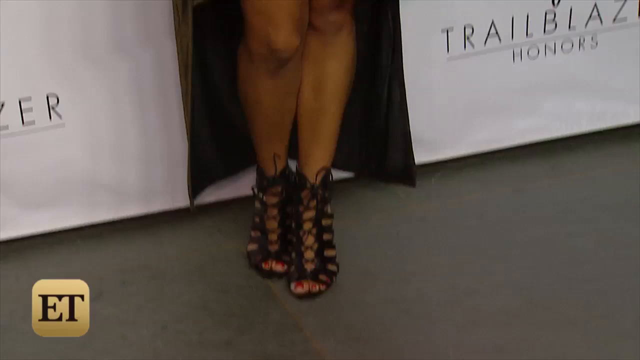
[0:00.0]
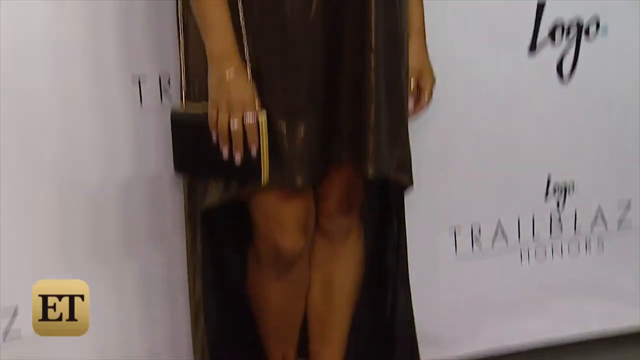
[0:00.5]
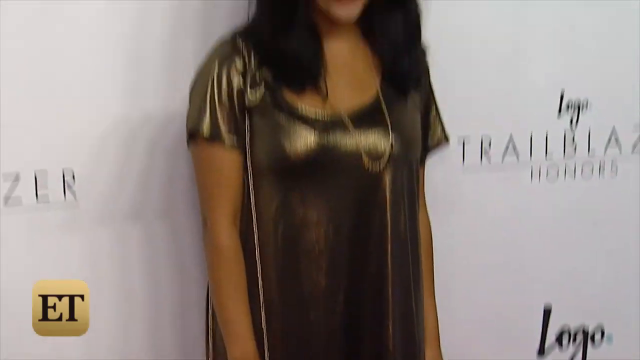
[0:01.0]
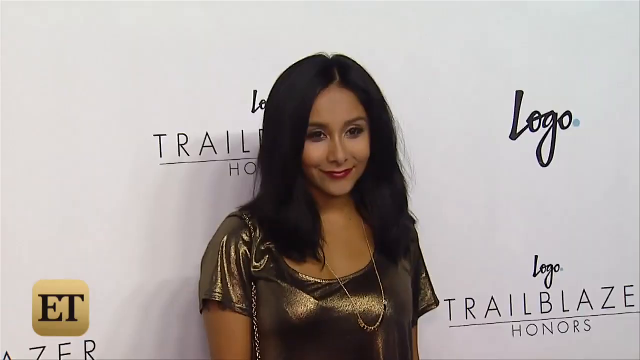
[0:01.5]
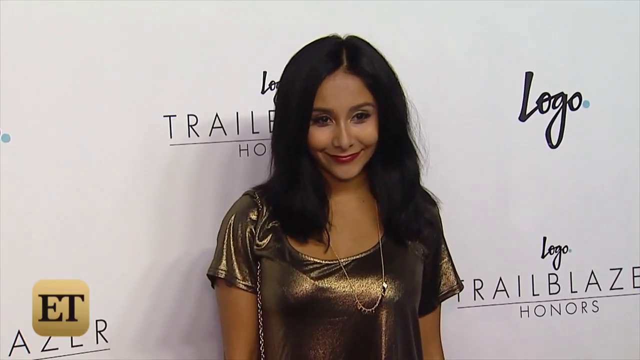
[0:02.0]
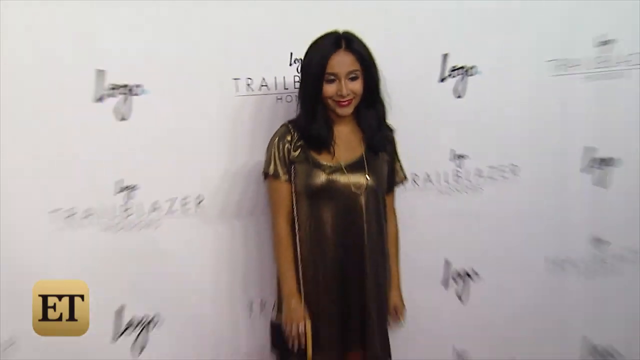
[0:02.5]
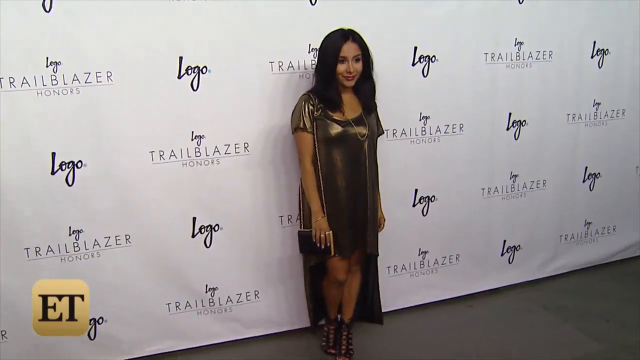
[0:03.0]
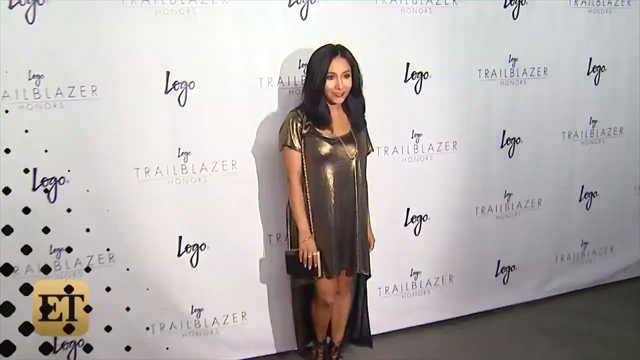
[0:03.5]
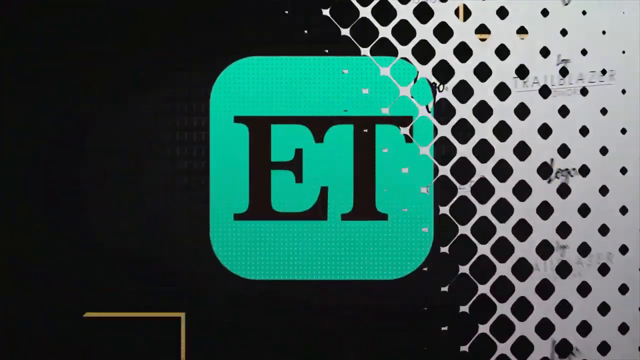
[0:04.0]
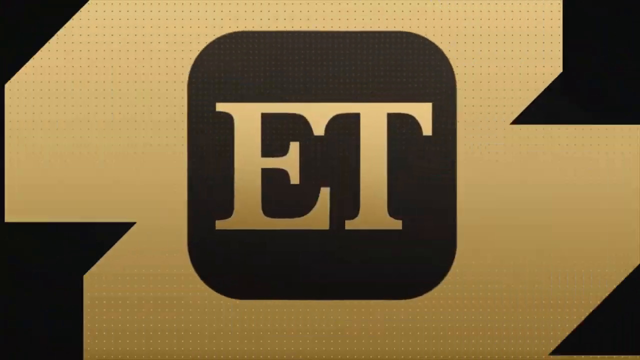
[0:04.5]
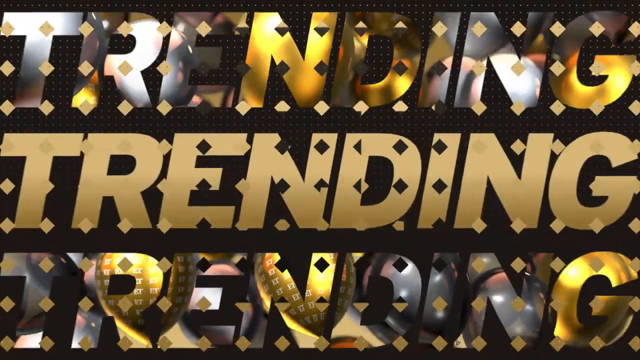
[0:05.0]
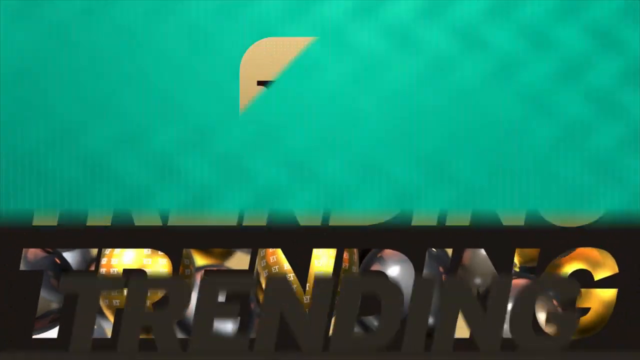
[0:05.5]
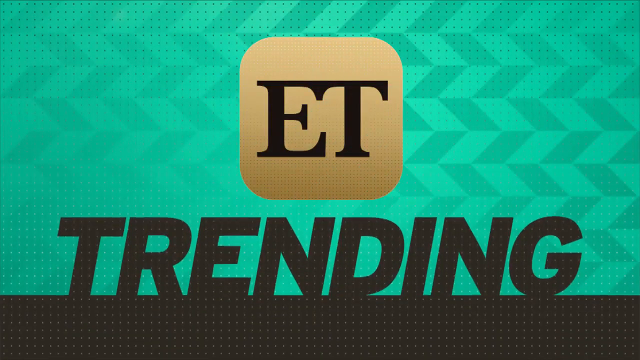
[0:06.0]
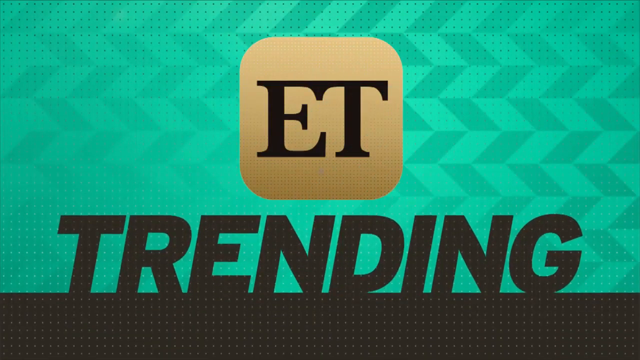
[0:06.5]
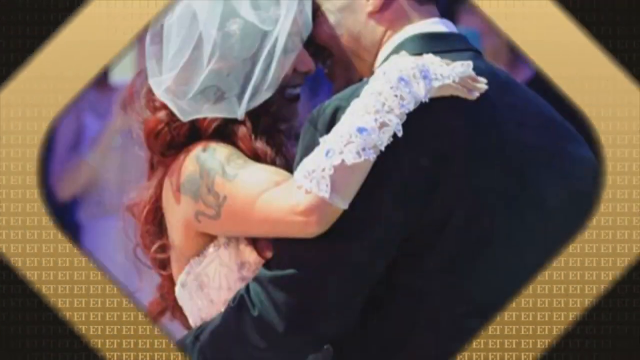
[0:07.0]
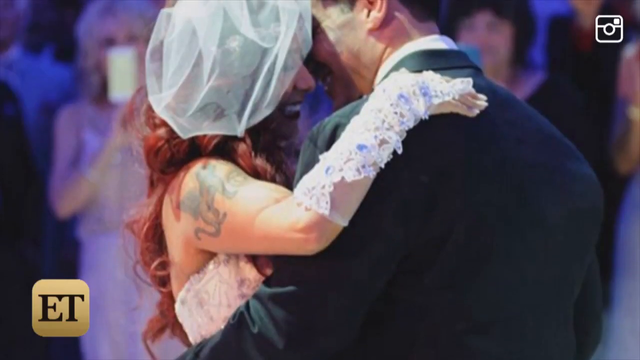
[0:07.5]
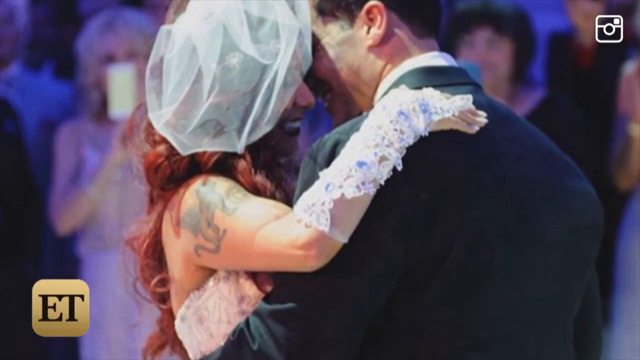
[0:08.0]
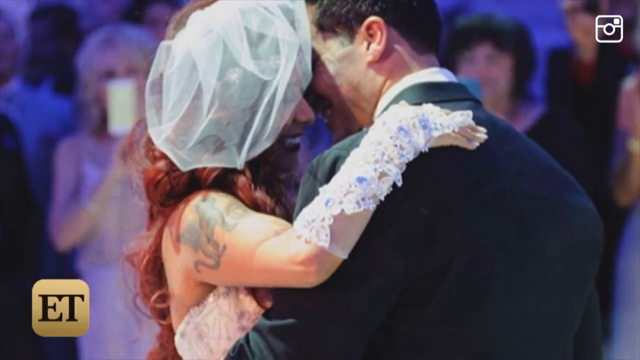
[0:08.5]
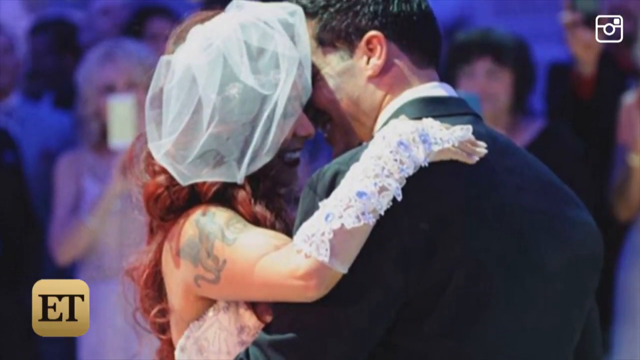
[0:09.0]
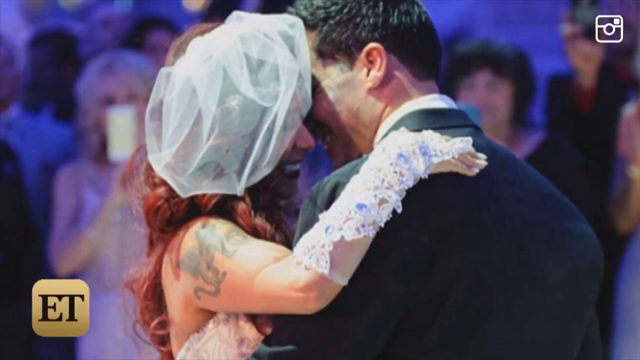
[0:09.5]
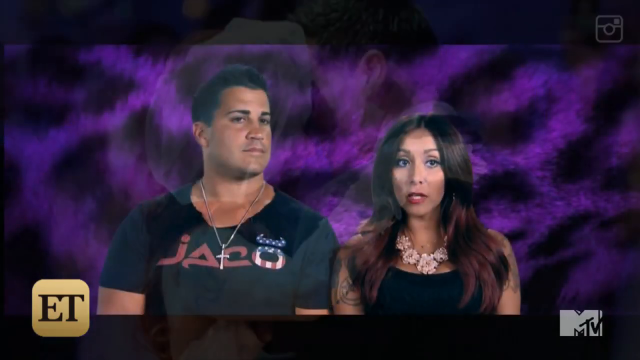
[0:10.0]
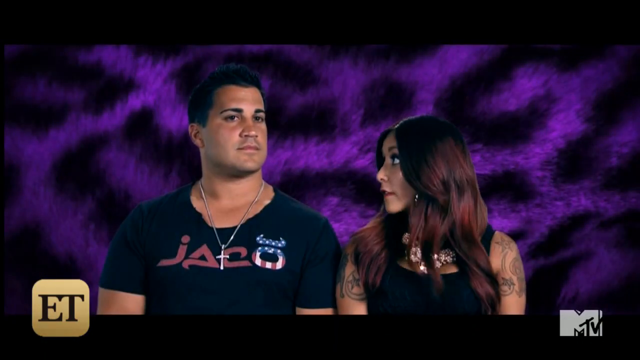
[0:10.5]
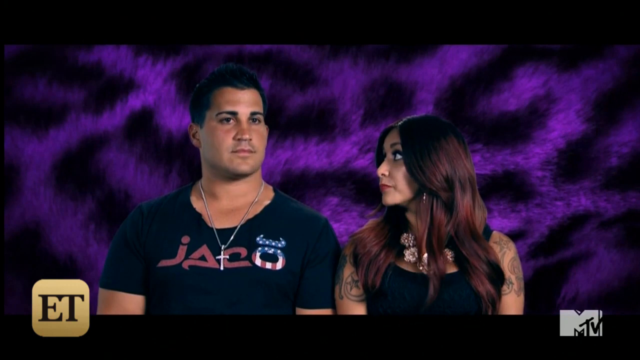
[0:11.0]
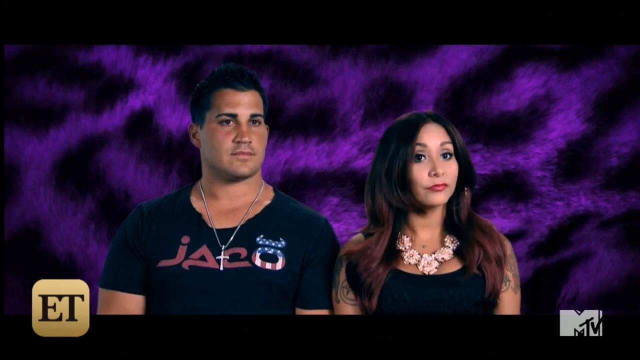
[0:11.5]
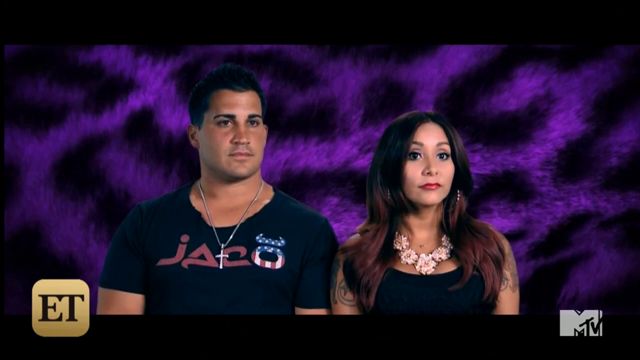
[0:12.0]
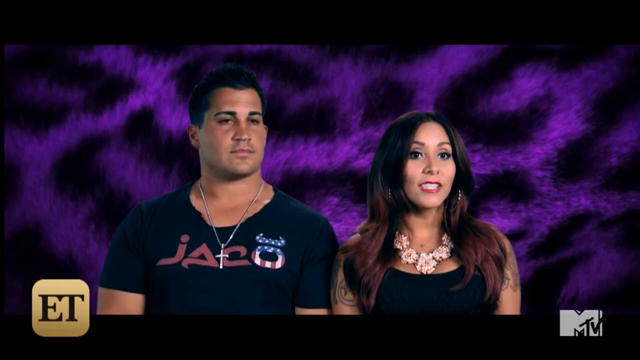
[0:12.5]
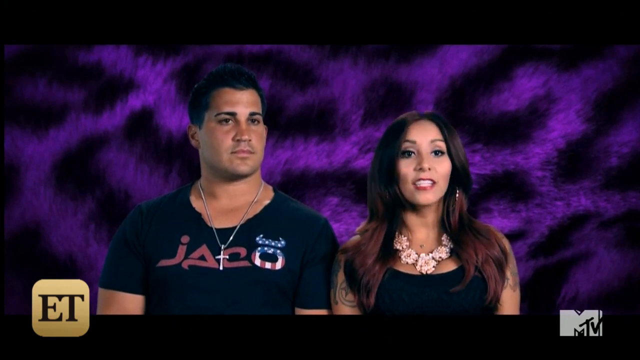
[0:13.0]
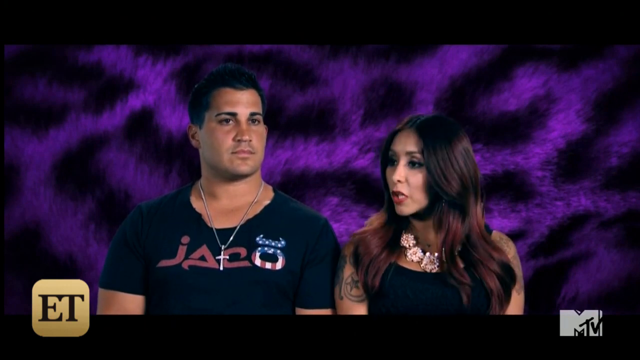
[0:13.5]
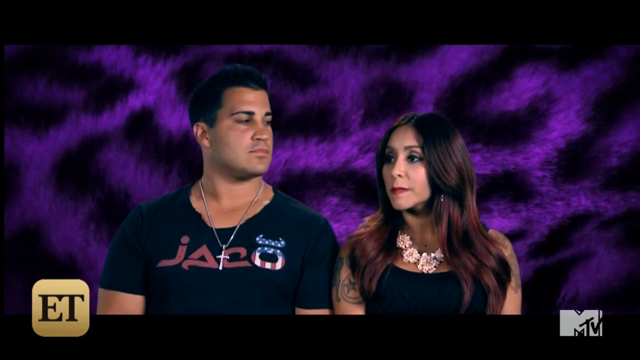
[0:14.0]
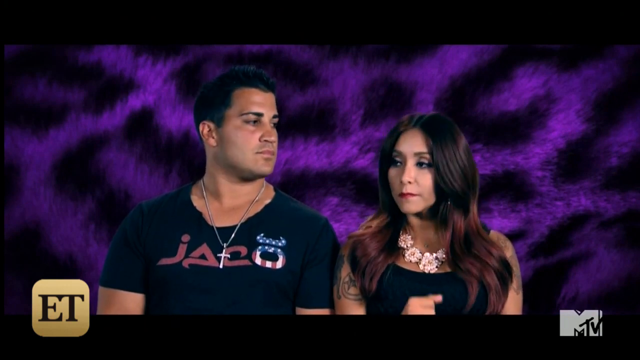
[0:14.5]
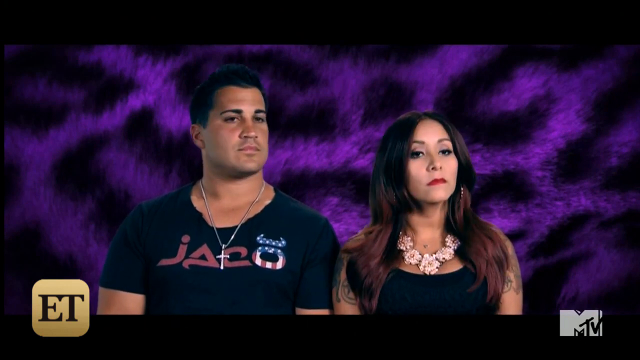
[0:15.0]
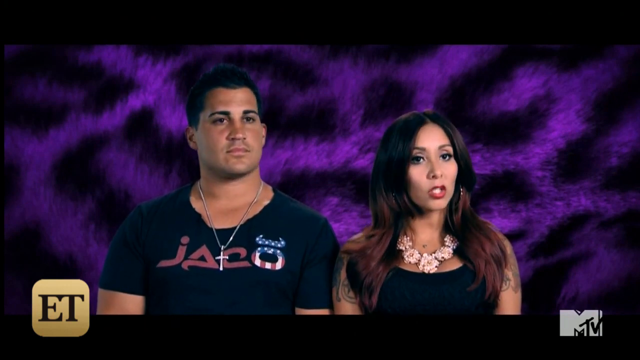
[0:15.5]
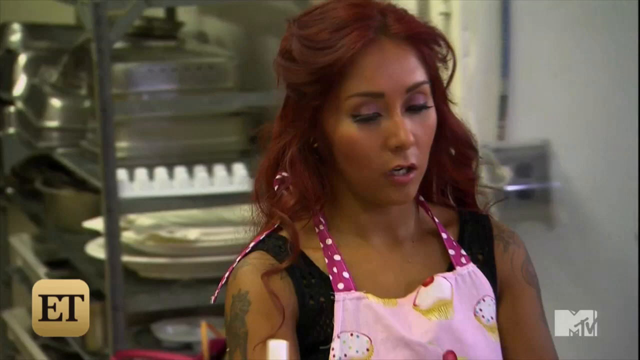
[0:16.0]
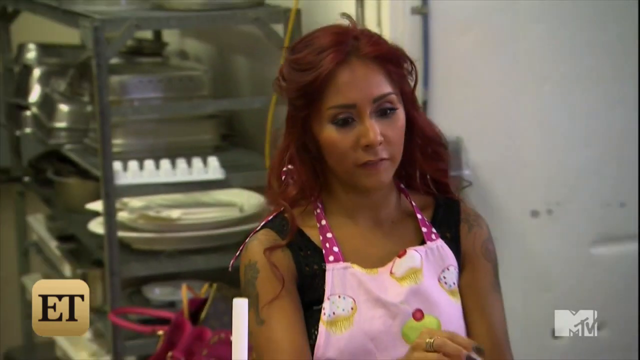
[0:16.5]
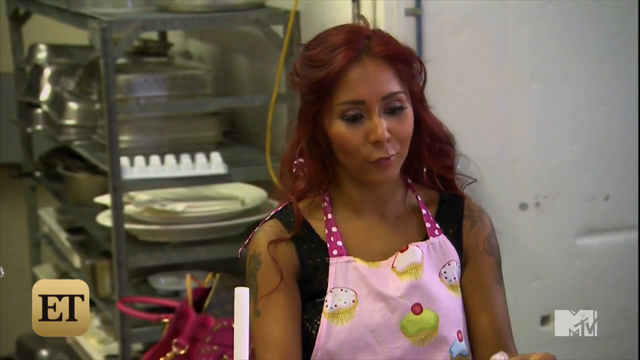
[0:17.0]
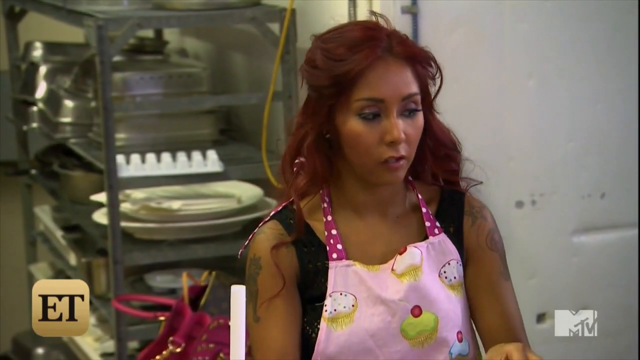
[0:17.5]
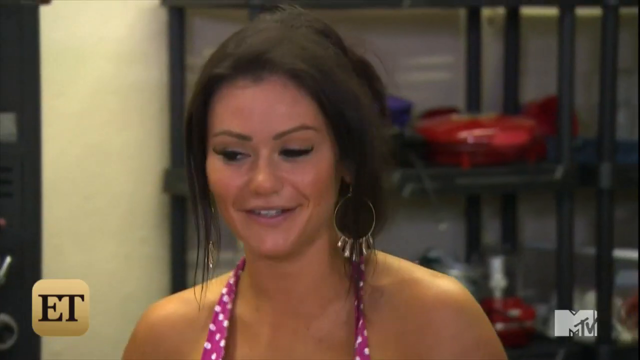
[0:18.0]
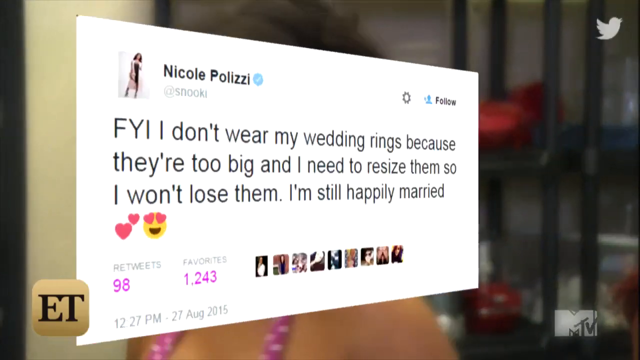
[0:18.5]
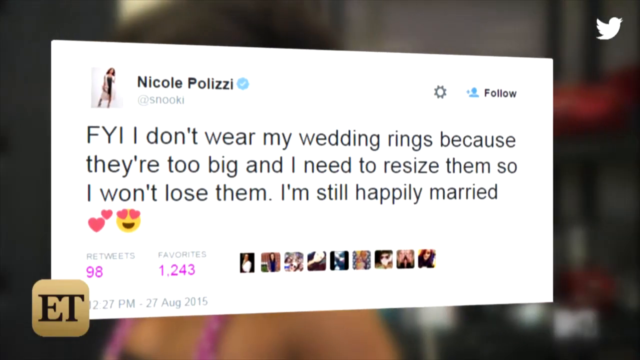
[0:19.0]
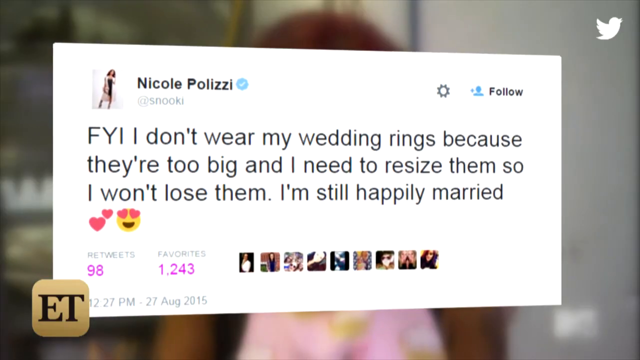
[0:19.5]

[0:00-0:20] The camera pans up, showing a woman standing in front of a background as she has her picture taken a number of times. There are logos in the background, and in the bottom left-hand corner is a yellow and black ET logo. The view zooms out on the woman before she can be seen in full, and then changes to a stylized ET logo with the word "trending" over the screen. This changes to a static image of two people dancing, likely at a wedding, as the woman wears white and a number of people in the background are taking pictures. Next comes an interview with two people, a man and a woman: the woman speaks towards the camera and looks at the man, and the man nods. The woman continues to speak, nodding her head, and the video cuts to the woman in what looks like a kitchen. It then cuts to a tweet that reads, "FYI I don't wear my wedding rings because they're too big and I need to resize them so I won't lose them. I'm still happily married."